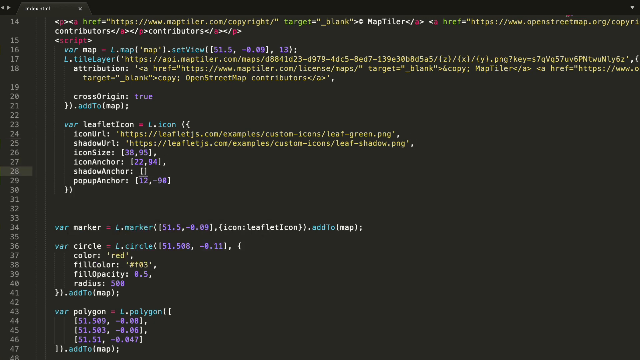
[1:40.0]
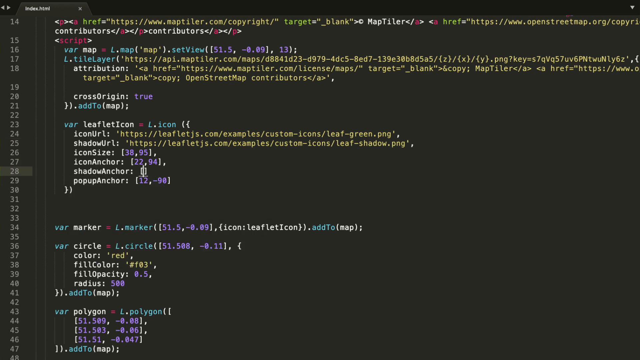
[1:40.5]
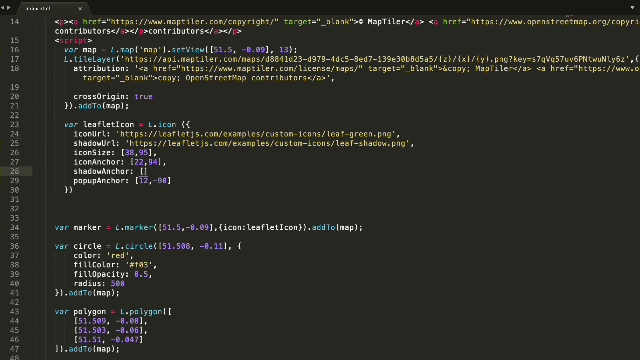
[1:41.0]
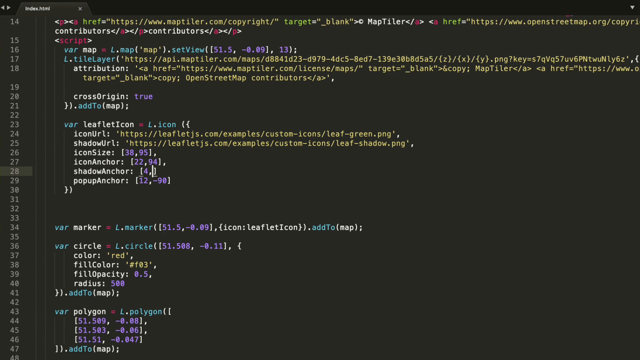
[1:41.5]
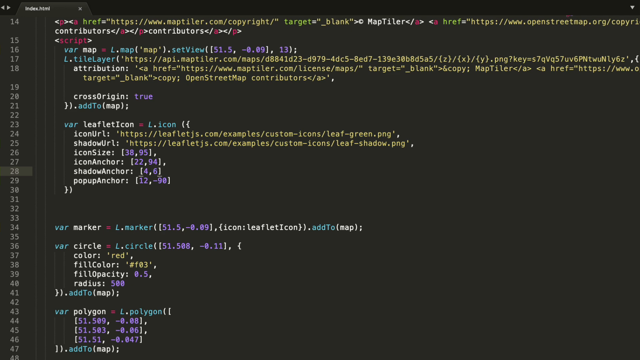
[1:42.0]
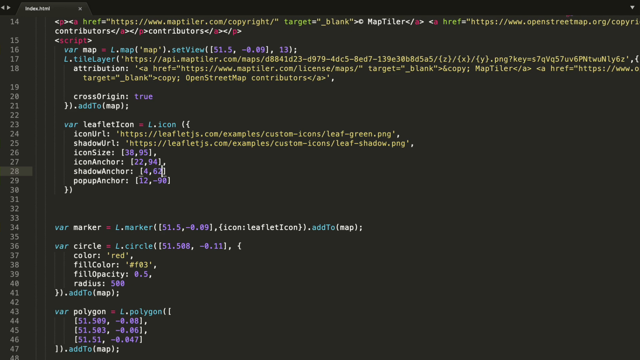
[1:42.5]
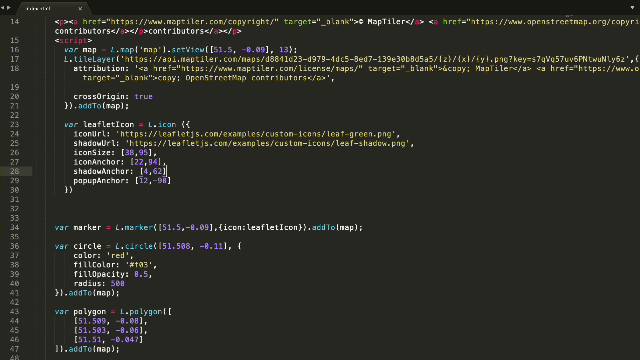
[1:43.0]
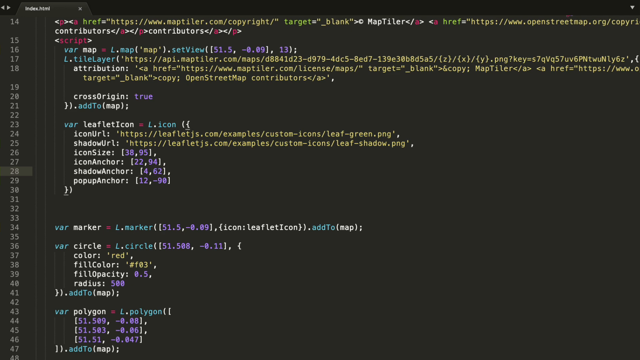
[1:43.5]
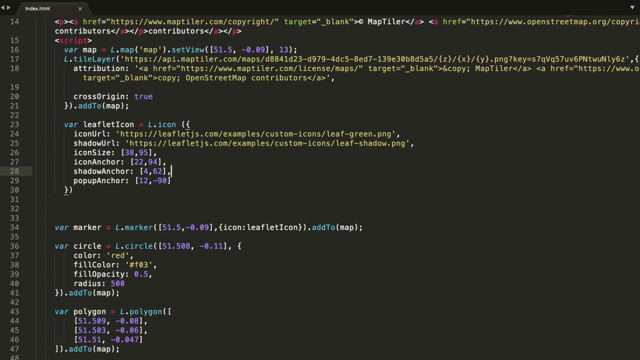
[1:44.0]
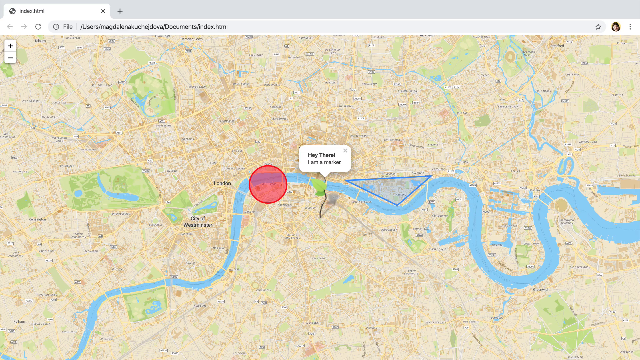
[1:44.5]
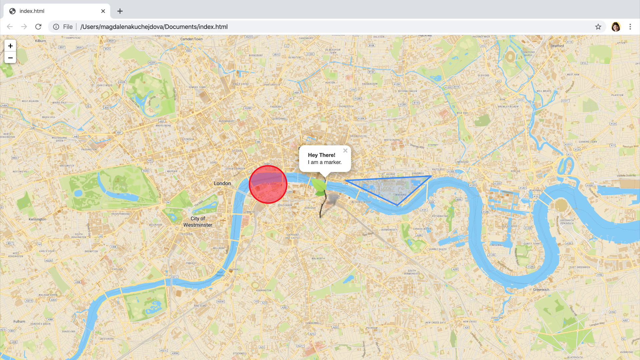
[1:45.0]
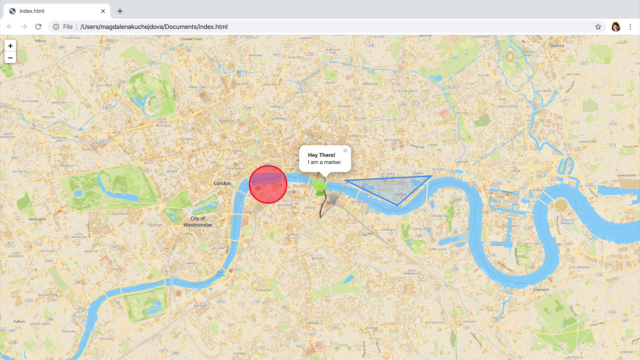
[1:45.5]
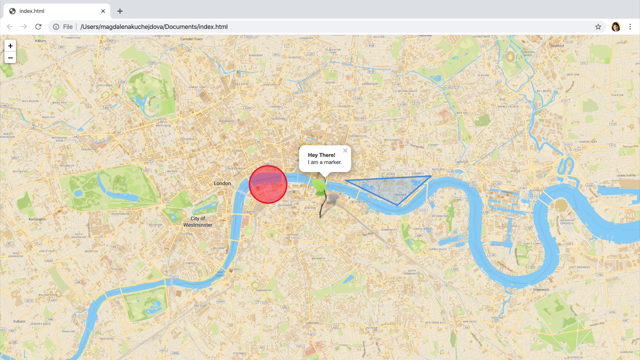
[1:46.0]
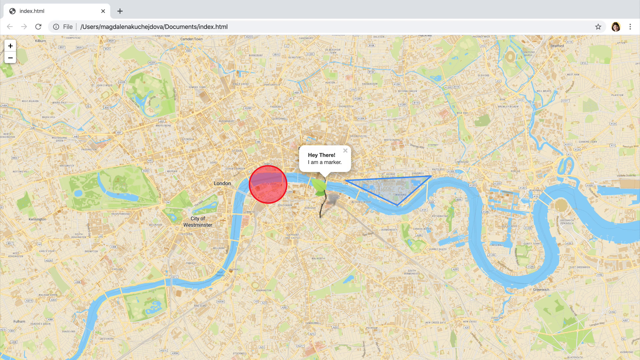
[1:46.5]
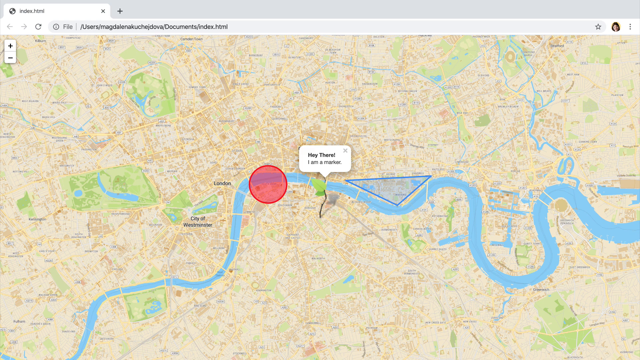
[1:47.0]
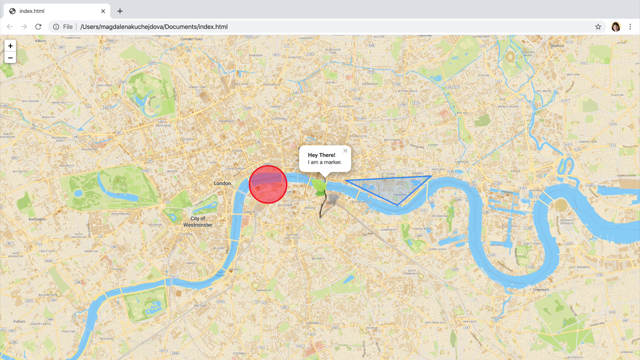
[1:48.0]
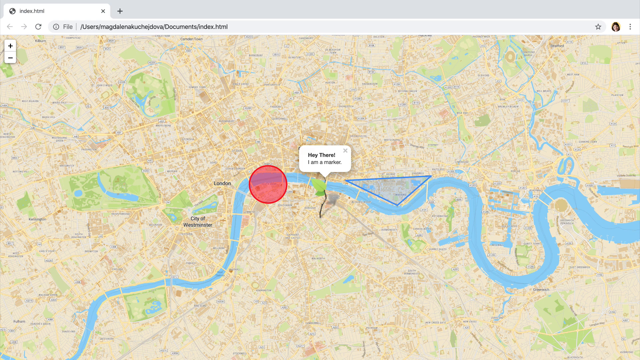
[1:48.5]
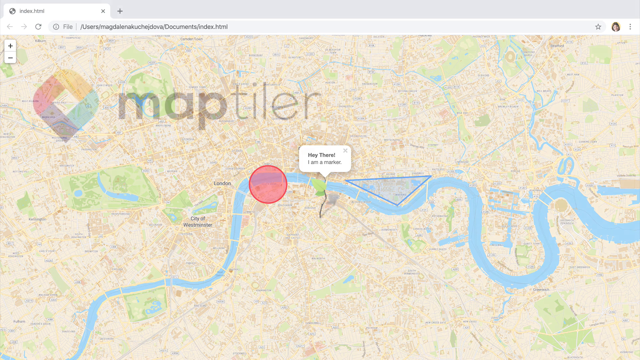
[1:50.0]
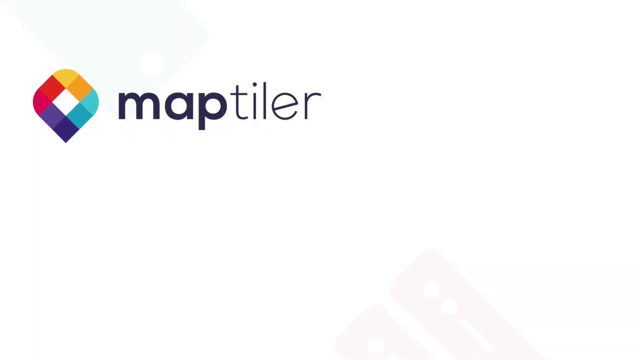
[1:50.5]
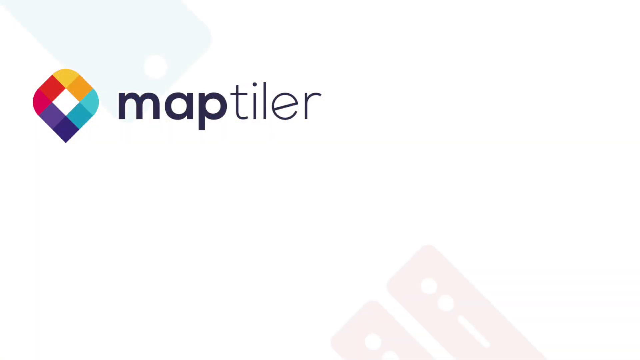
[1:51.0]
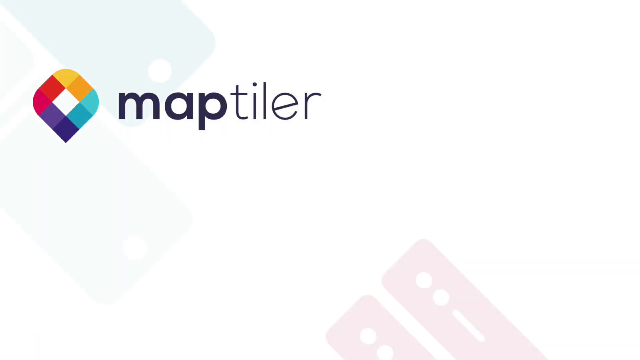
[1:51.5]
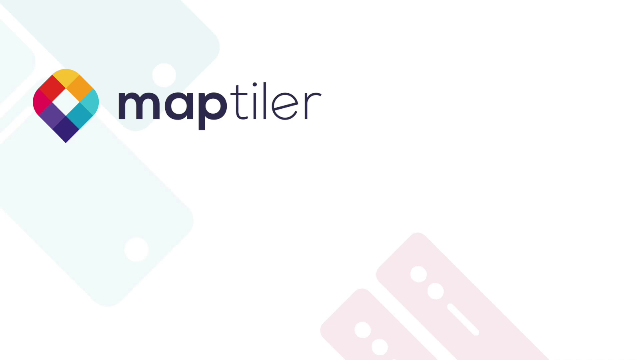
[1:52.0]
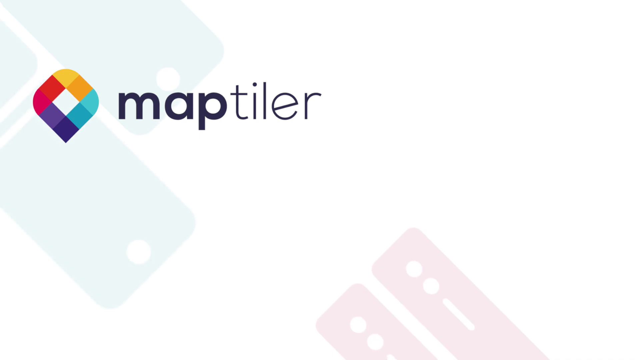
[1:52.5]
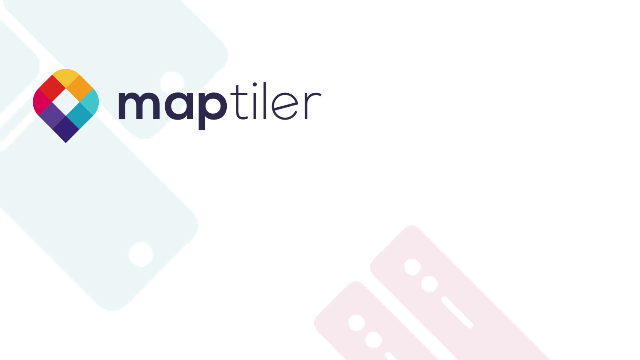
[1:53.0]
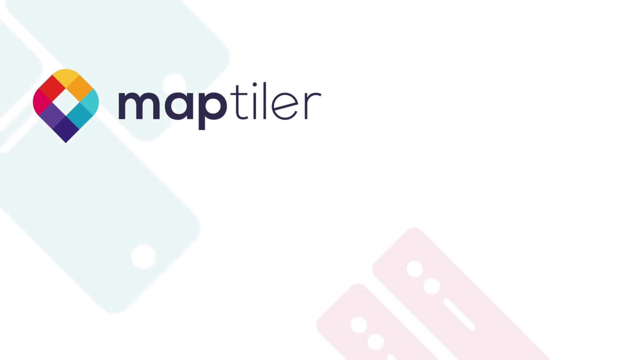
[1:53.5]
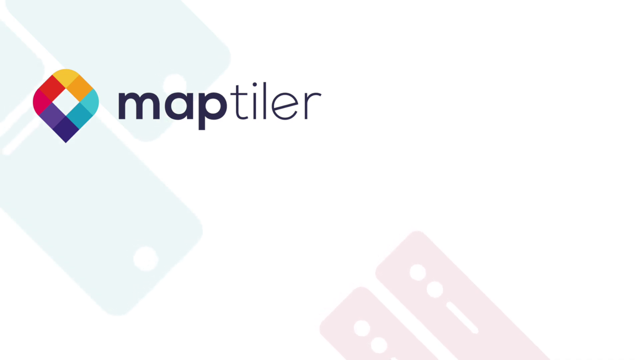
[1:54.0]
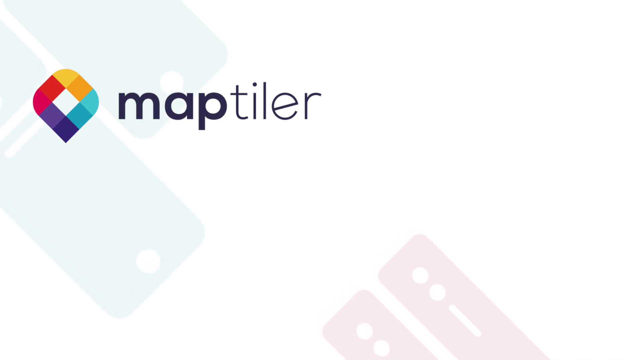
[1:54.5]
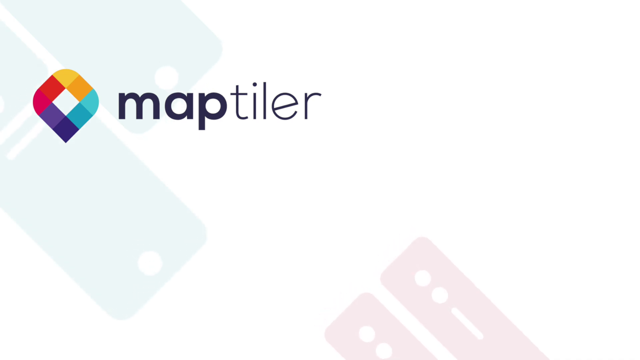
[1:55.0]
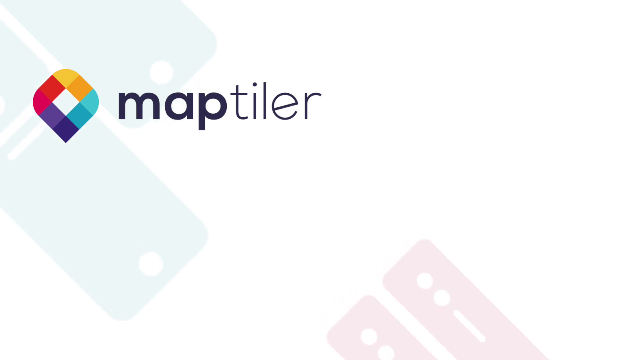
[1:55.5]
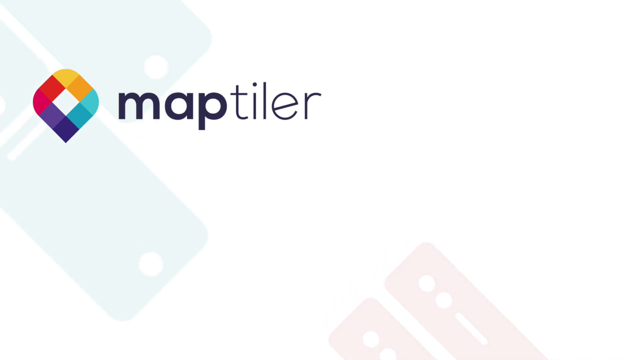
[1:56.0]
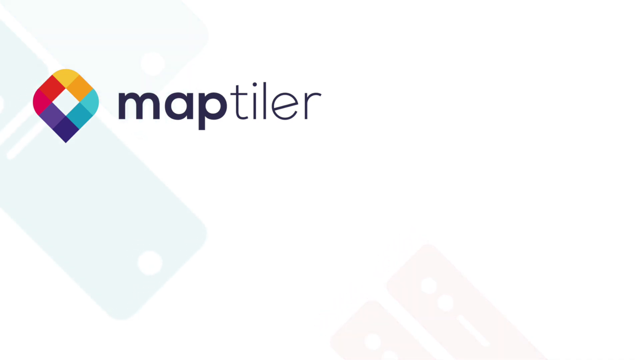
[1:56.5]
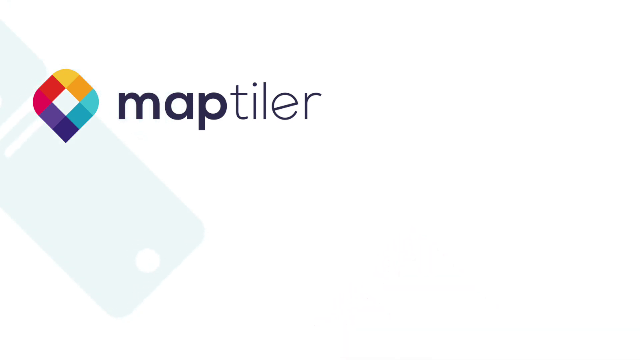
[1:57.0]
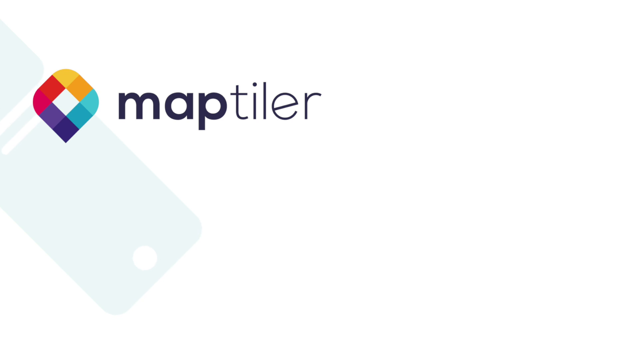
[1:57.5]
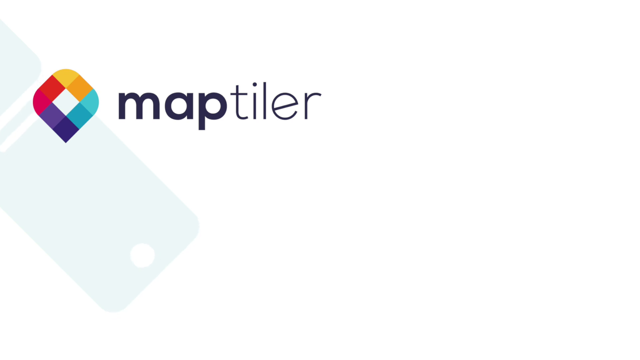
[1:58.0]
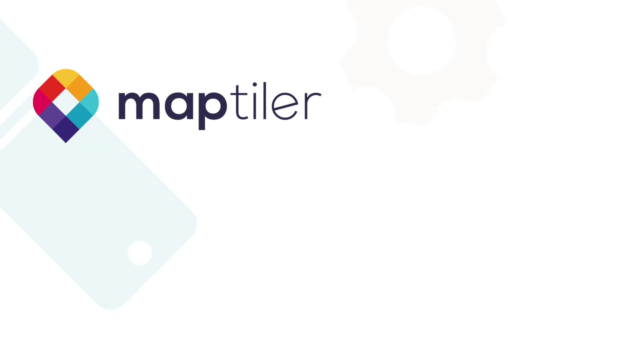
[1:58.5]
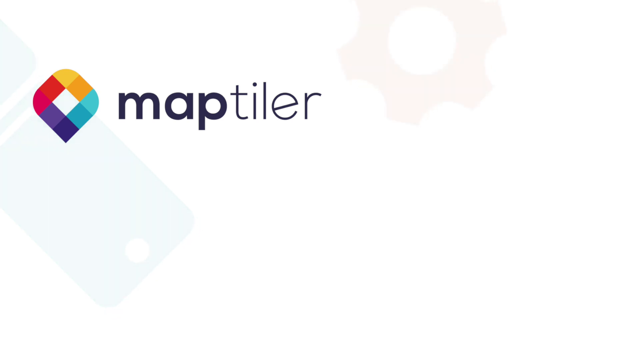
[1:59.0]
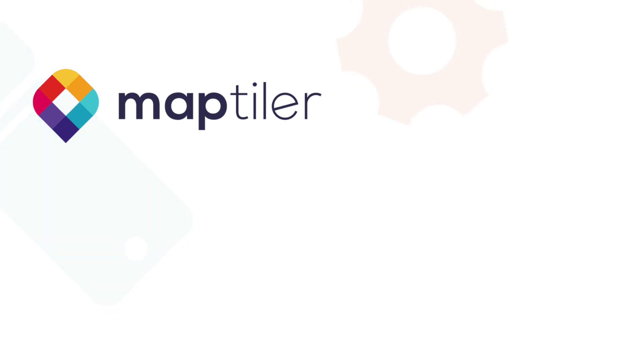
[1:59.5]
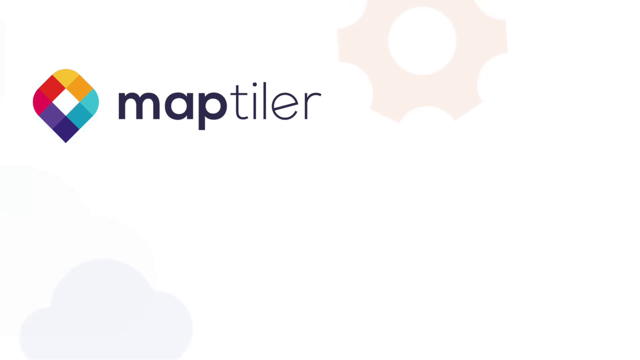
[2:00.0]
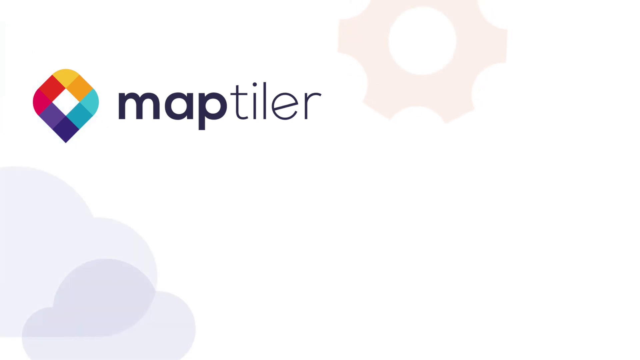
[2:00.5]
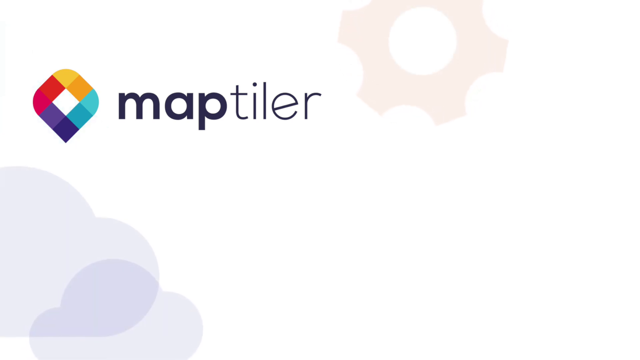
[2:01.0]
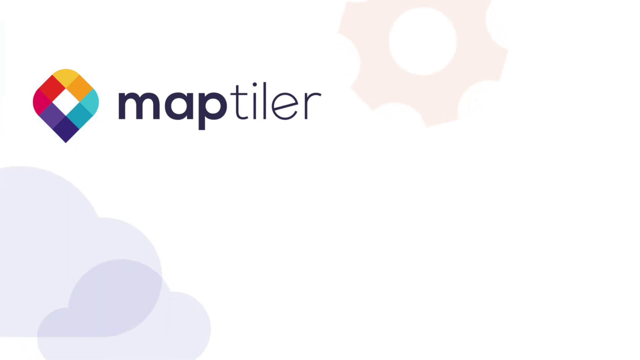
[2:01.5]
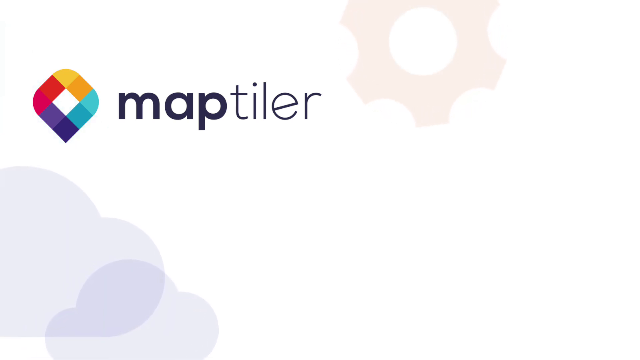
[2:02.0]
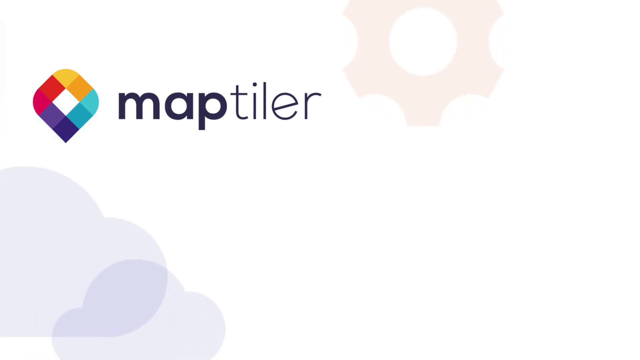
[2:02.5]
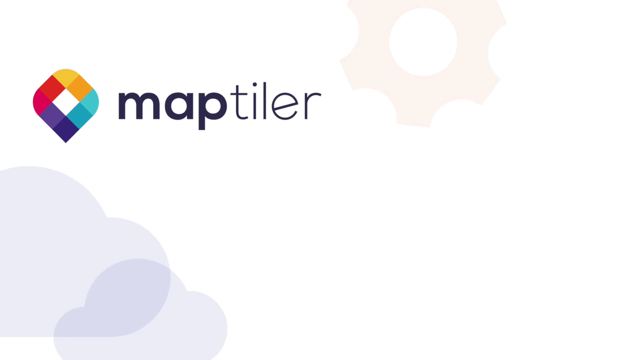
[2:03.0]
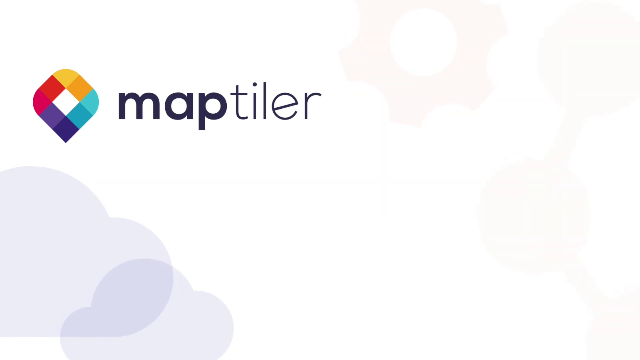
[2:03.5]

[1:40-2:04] The shadow anchor is finished with the number 62, followed by a parenthesis and a comma. The map is shown with the shadow now visible on it. The video then goes to a white screen with the tiled logo from the beginning and the word "Map Tyler" next to it, both in the top left-hand side of the screen, while clouds and designs float around in the background behind the word and logo. This stays on screen to the end.